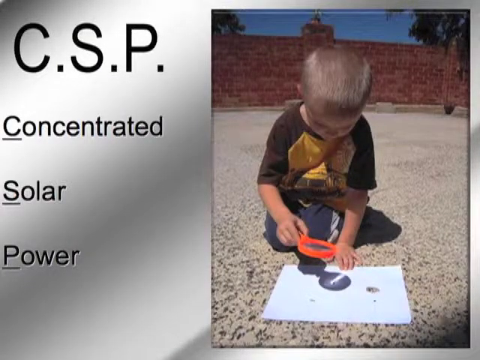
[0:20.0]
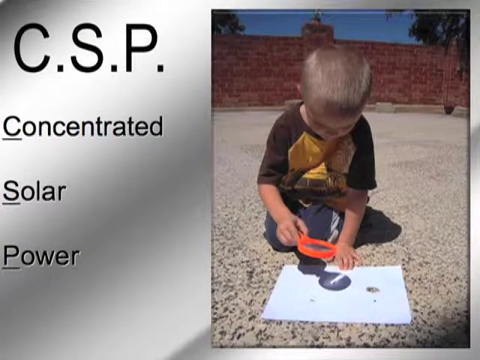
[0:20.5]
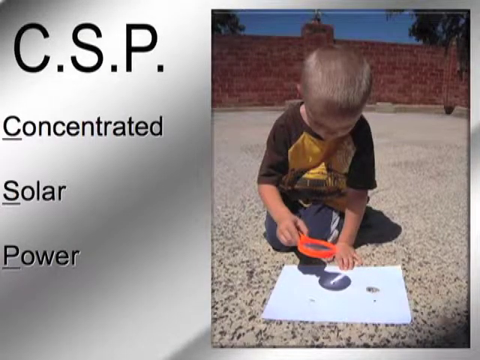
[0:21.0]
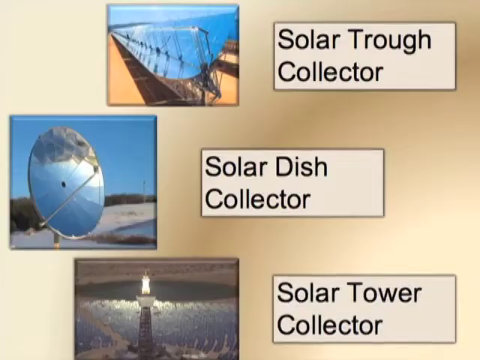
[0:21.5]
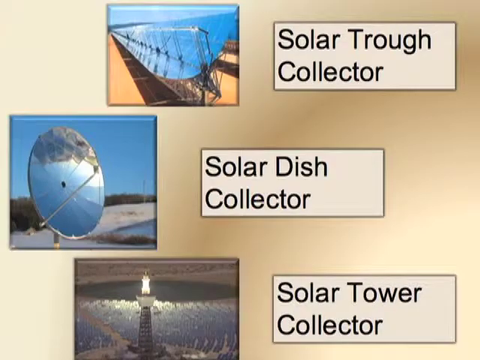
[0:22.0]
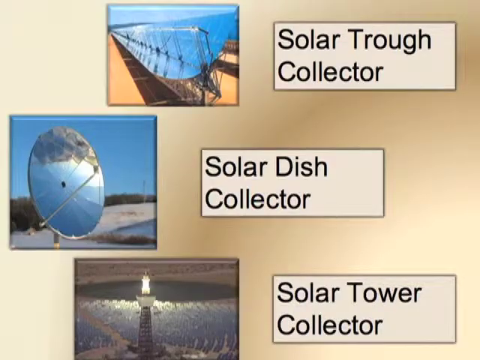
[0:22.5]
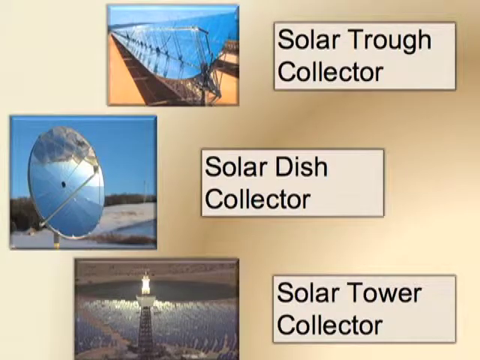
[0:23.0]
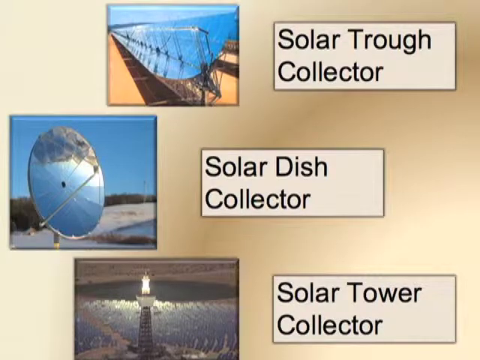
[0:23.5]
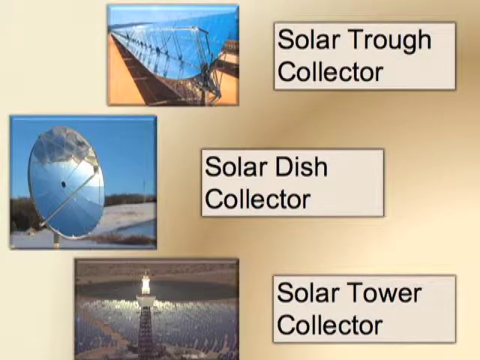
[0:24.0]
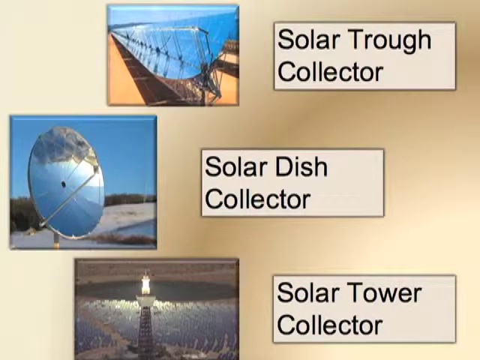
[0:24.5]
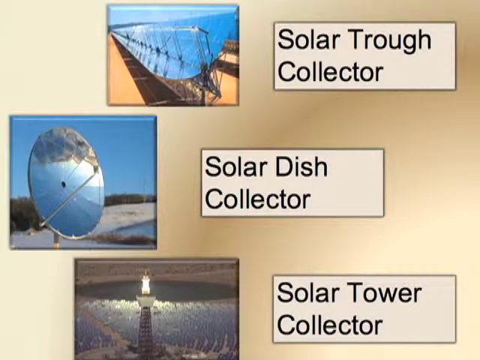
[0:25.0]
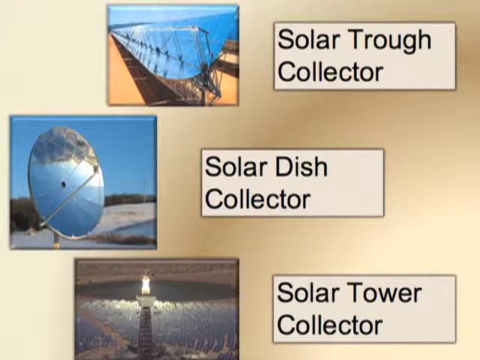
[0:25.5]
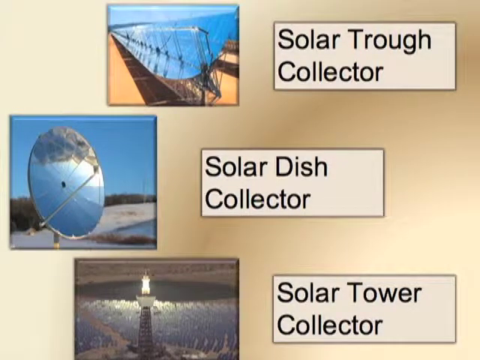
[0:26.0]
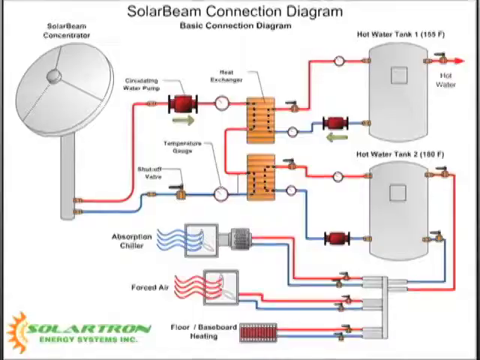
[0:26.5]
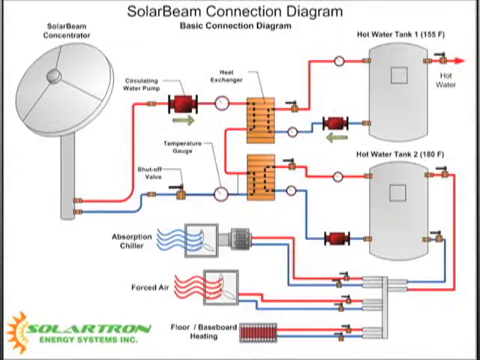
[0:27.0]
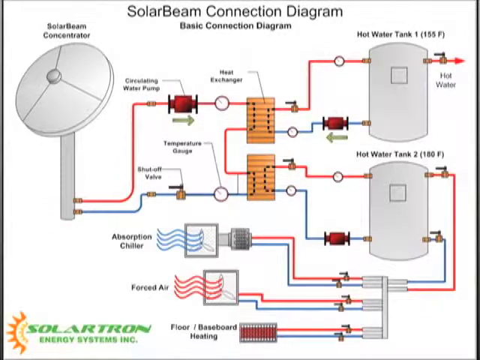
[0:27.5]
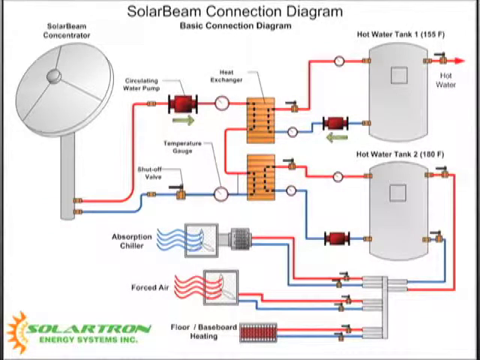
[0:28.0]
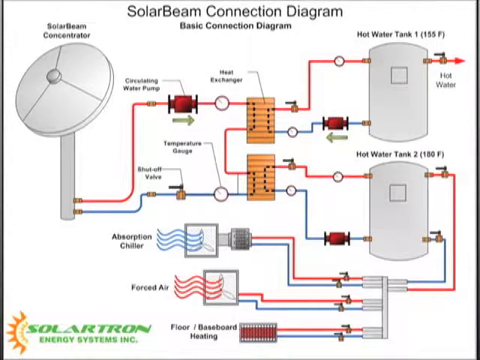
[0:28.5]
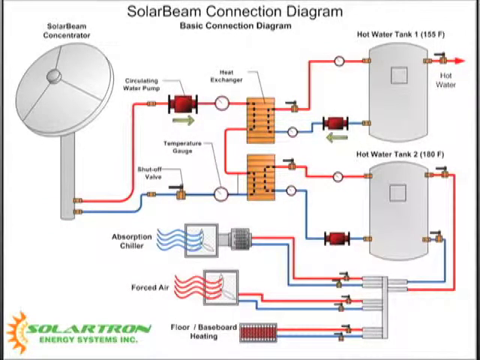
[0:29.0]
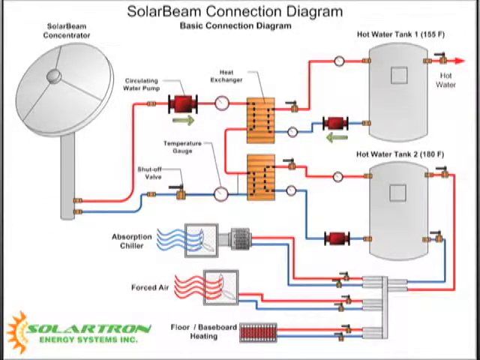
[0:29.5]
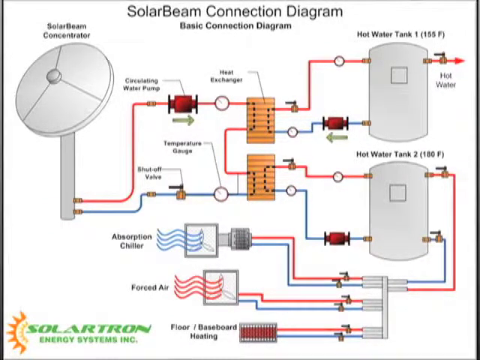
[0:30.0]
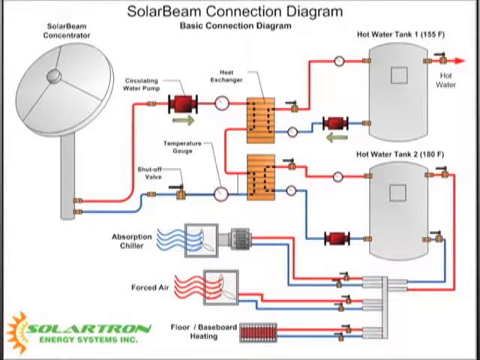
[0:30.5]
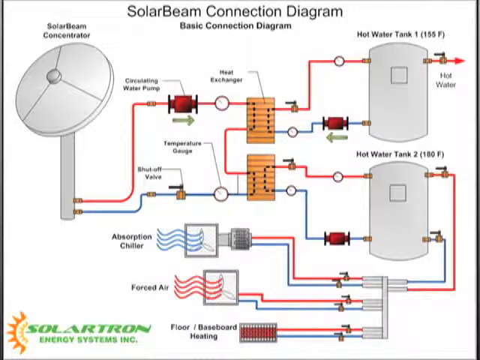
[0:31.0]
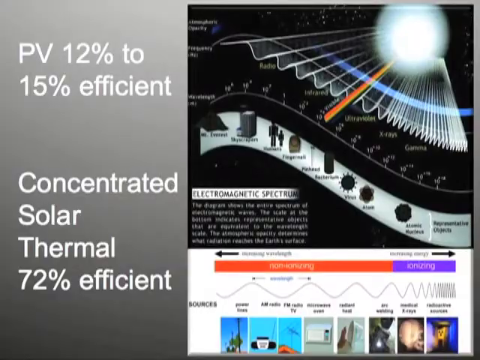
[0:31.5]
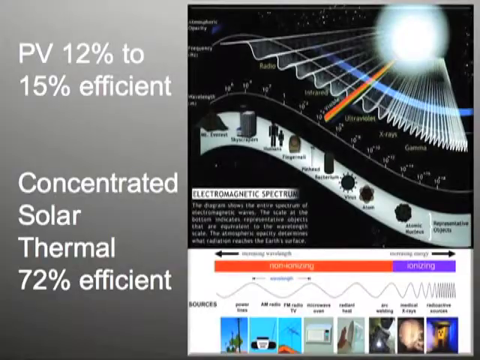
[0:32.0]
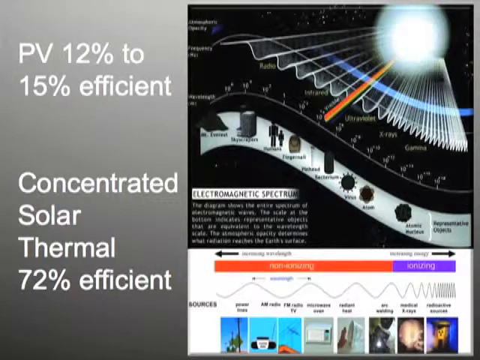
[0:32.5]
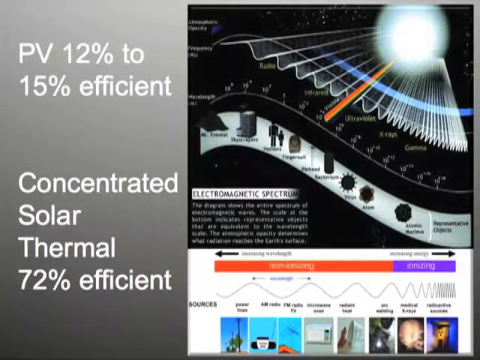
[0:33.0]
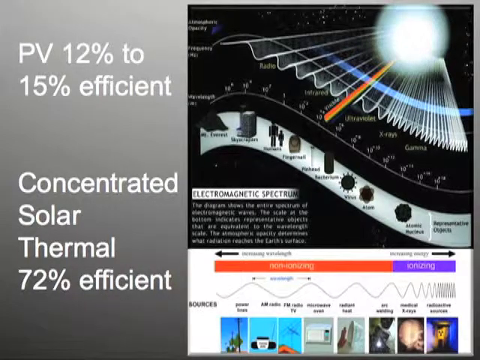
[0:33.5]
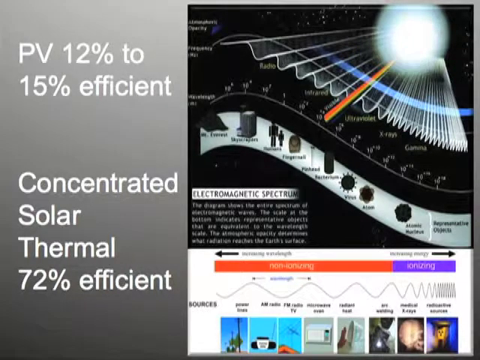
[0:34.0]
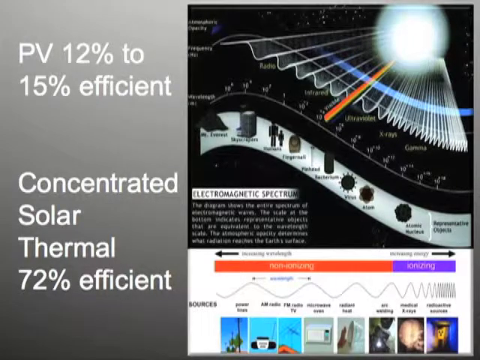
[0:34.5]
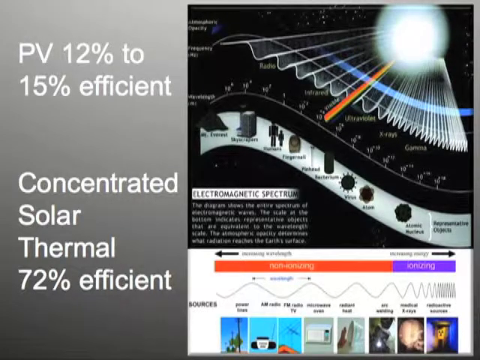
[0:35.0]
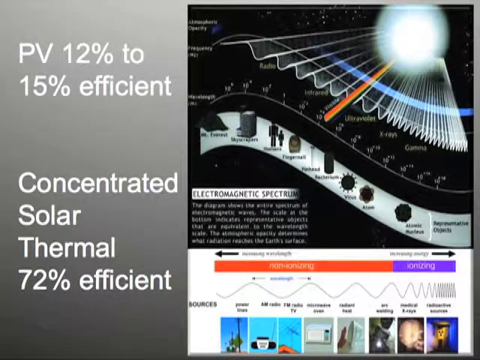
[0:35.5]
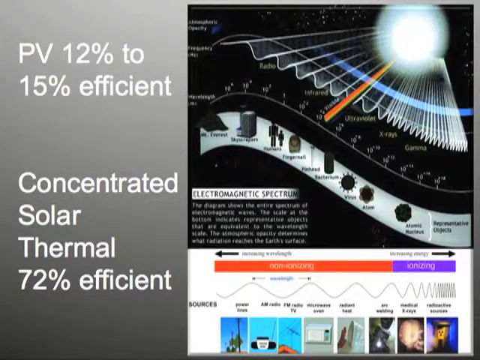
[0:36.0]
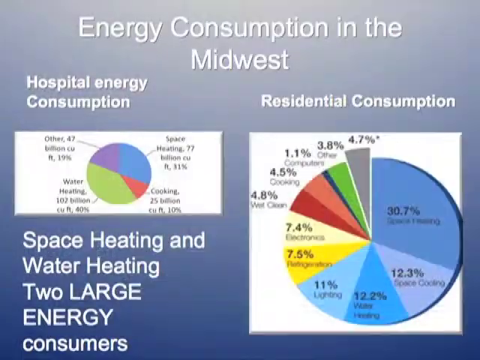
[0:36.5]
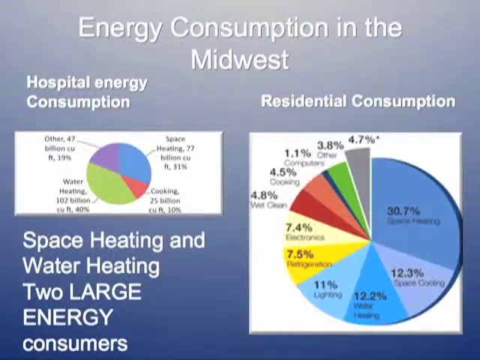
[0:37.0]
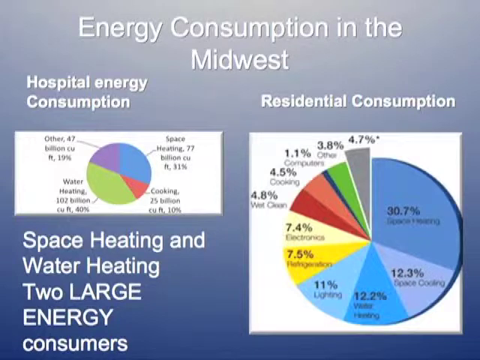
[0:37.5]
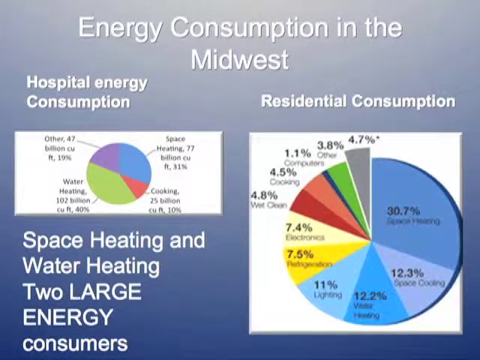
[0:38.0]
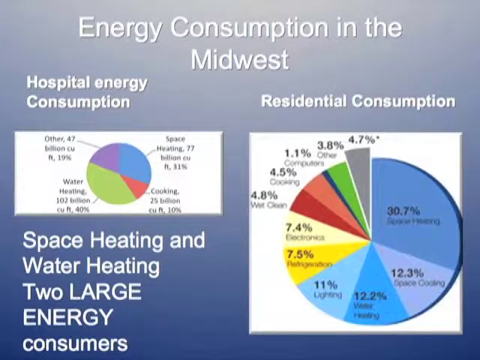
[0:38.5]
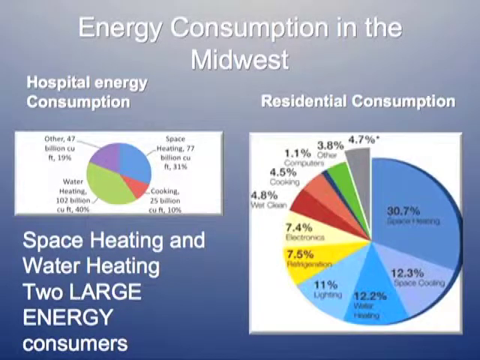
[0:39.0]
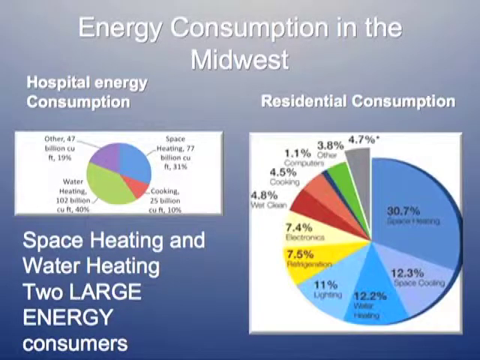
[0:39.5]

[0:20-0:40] The bar appears, and the capital letters "CSP" are shown very quickly, each letter labeled with something. CSP stands for Concentrated Solar Power, shown on a silver background next to the little boy. The boy has a magnifying glass in his hands and a piece of paper on the ground, and looks like he may be trying to identify some type of bug. He is sitting outside on the ground in daytime, with sunlight and a couple of trees behind him. Another solar dish is shown, then a tower. Next comes a large chart graphic of everything the system is connected to, with illustrations including a solar dish and red and blue lines like power connections. It takes up a good part of the screen, and much of the print is small, but "forced air" and illustrations of a hot water tank can be made out. Another screen shows "PV 12% to 15%" with information underneath and more information on another side. Then what looks like a drawing of the electromagnetic spectrum appears, with parts of it labeled and labels along the bottom. The last part is about energy consumption, with two colorful pie graphs, one on the left and one on the right. The one on the right apparently shows water heating at 107 billion as the largest section, shaded lime green; other colors include light blue and purple, and everything is labeled. The other pie graph, for consumption in the Midwest, has a lot of blue and is more divided.